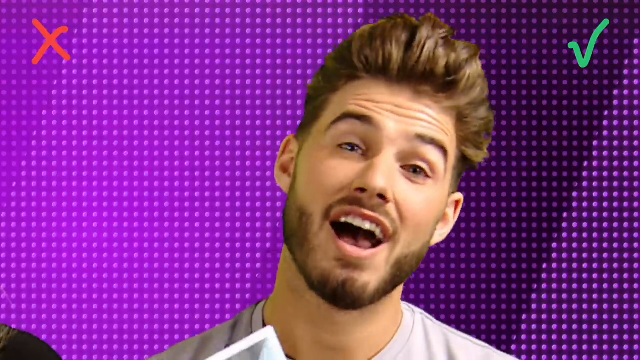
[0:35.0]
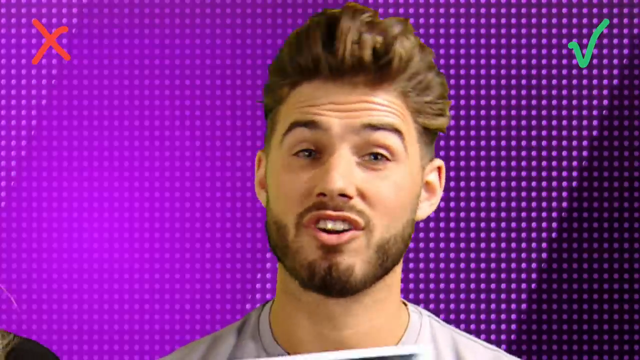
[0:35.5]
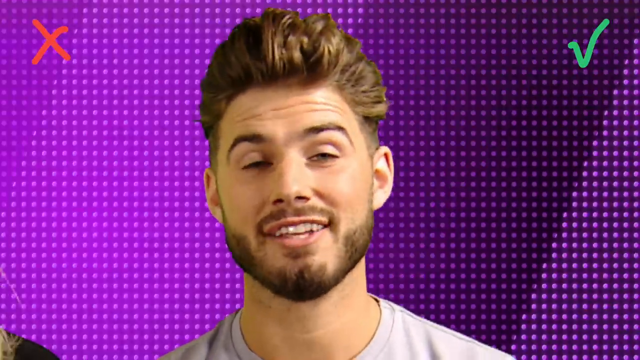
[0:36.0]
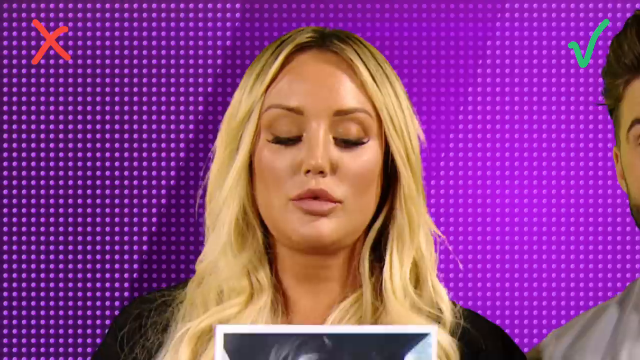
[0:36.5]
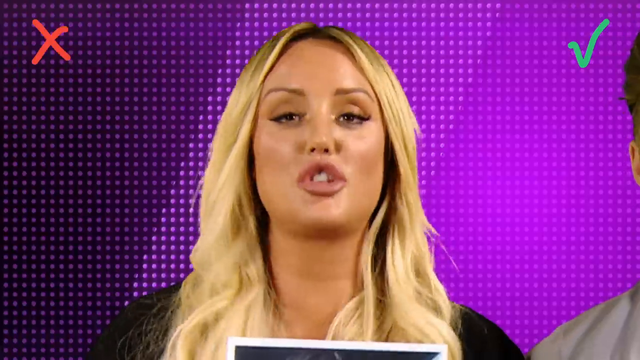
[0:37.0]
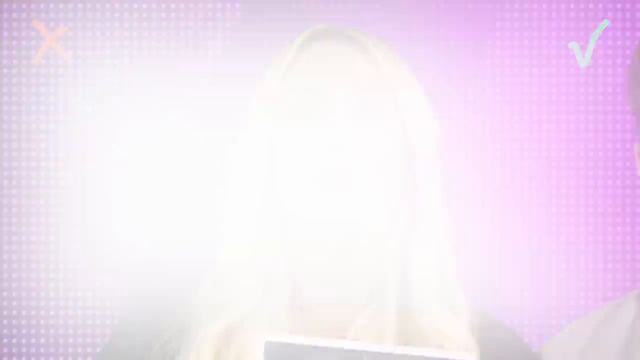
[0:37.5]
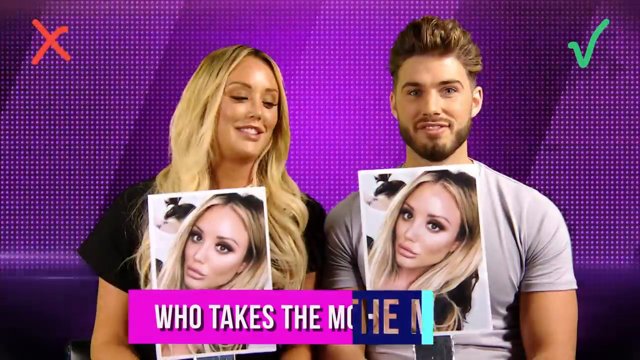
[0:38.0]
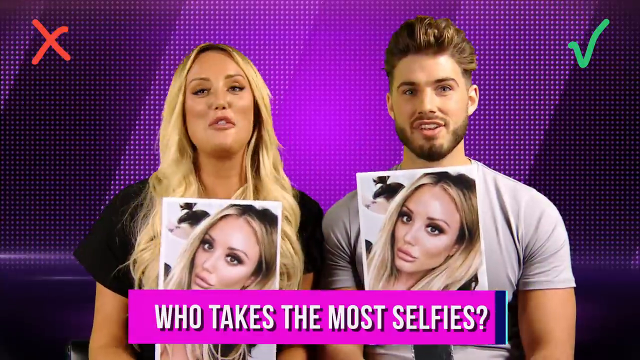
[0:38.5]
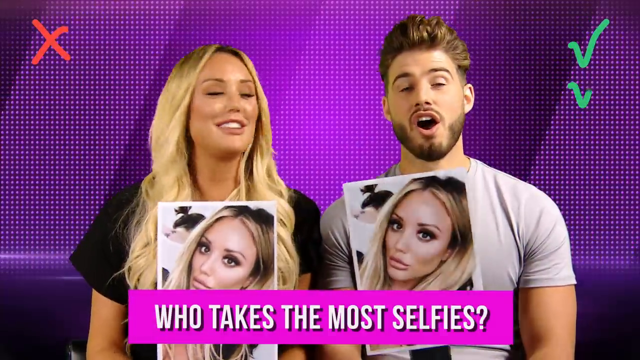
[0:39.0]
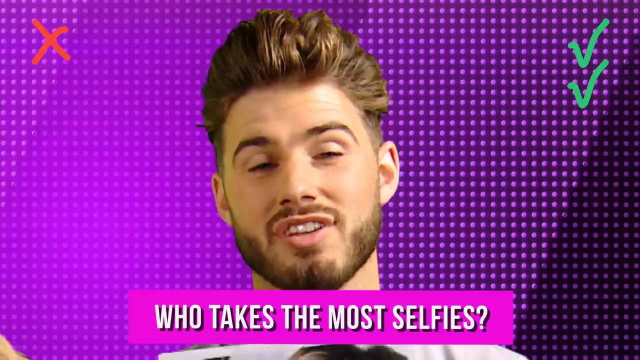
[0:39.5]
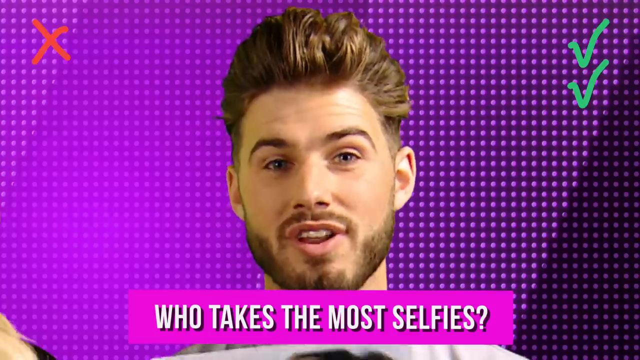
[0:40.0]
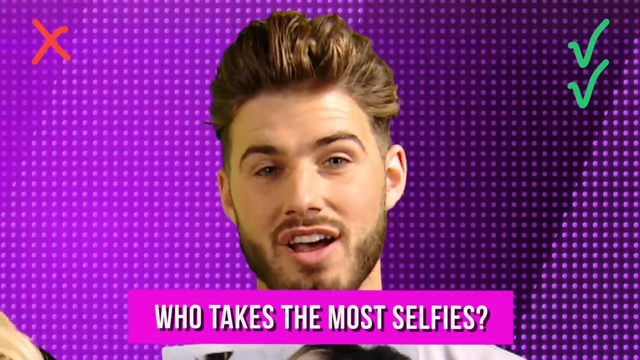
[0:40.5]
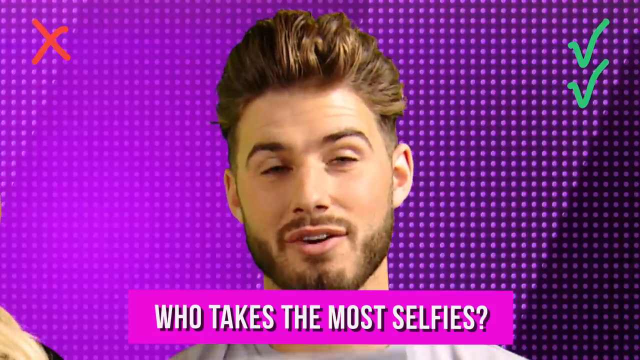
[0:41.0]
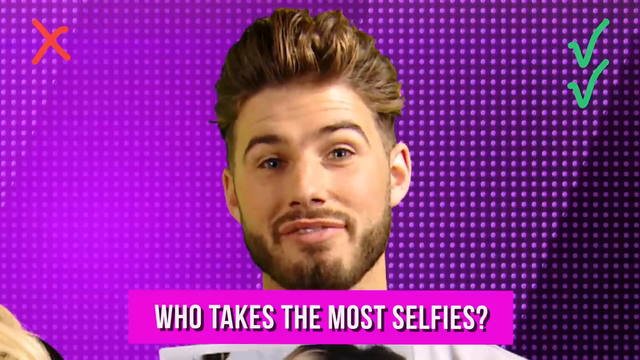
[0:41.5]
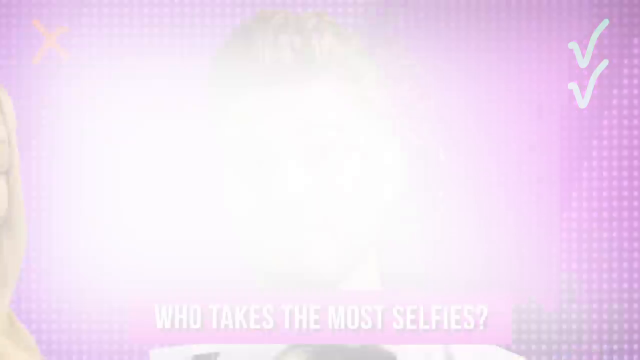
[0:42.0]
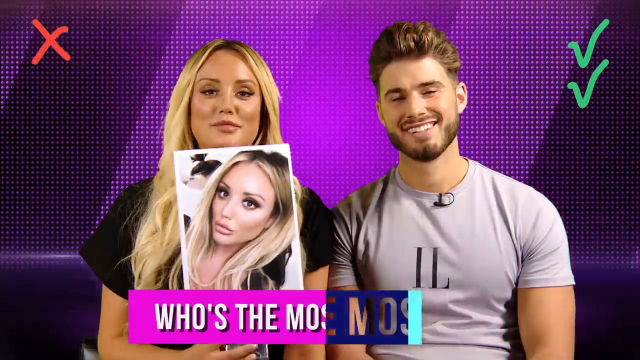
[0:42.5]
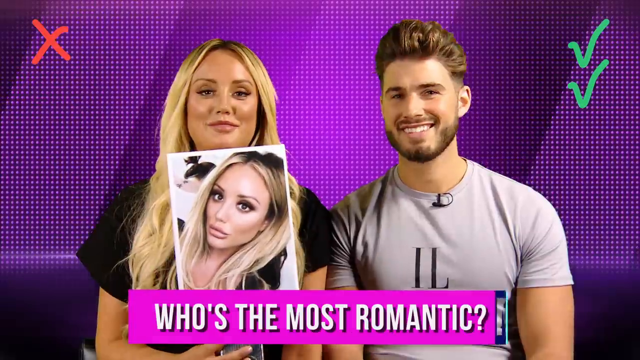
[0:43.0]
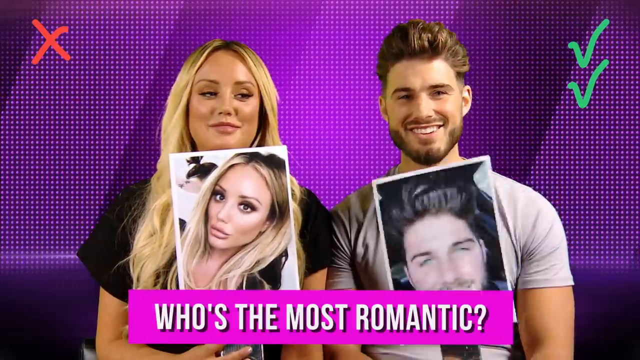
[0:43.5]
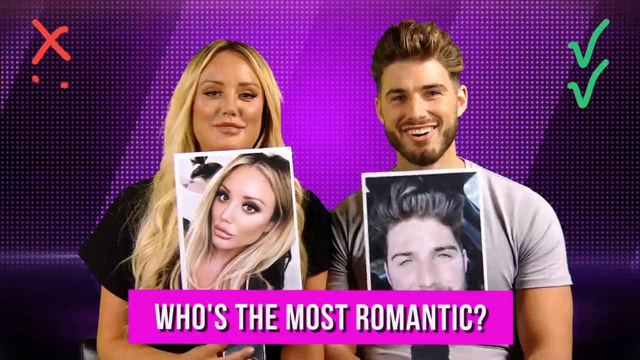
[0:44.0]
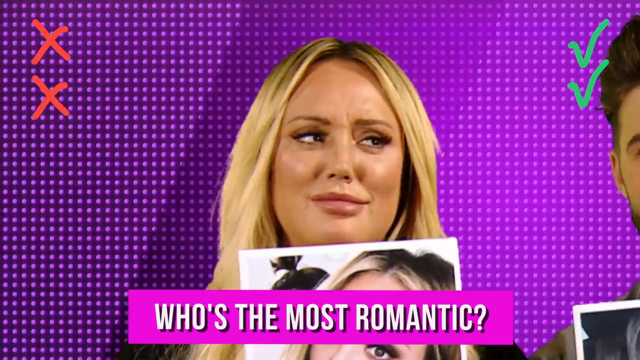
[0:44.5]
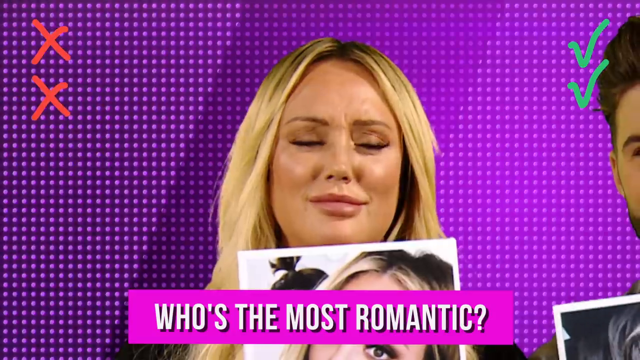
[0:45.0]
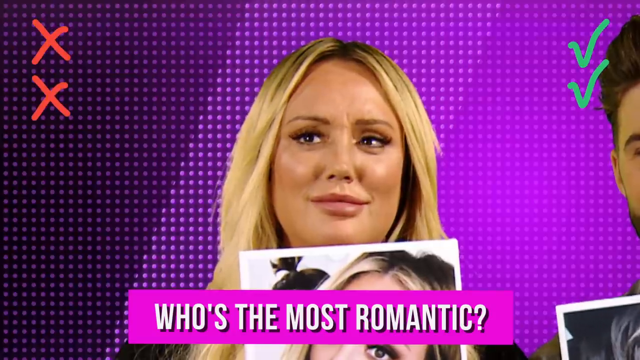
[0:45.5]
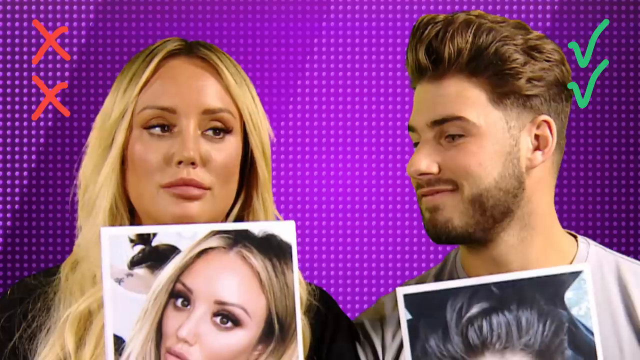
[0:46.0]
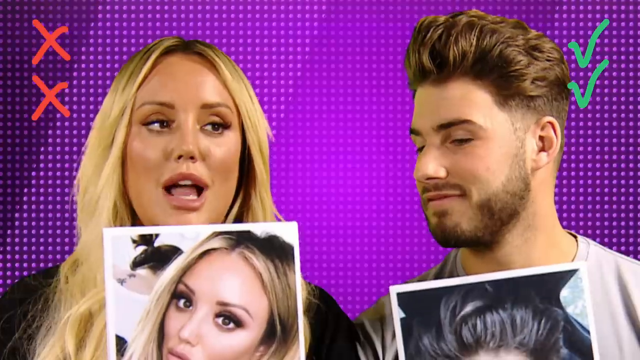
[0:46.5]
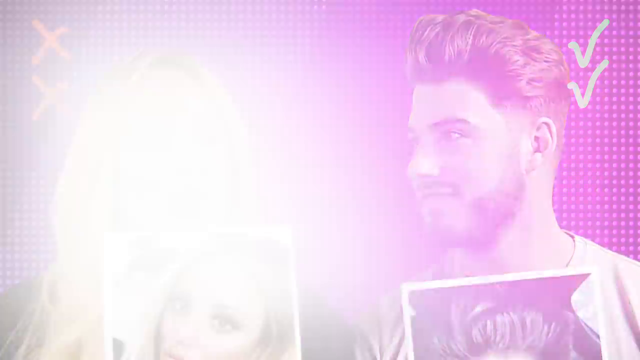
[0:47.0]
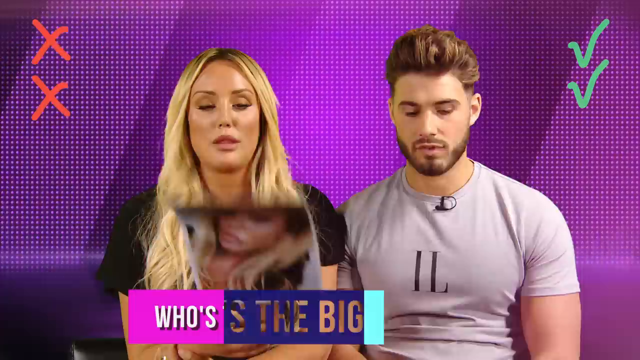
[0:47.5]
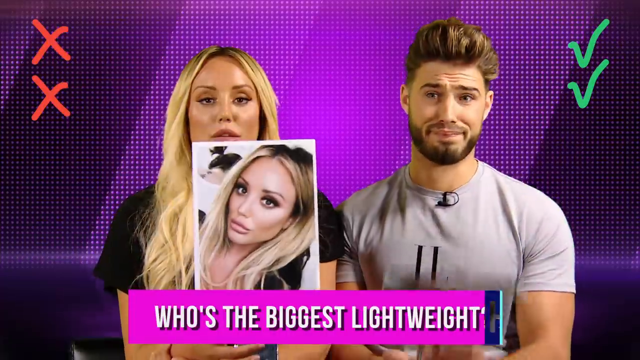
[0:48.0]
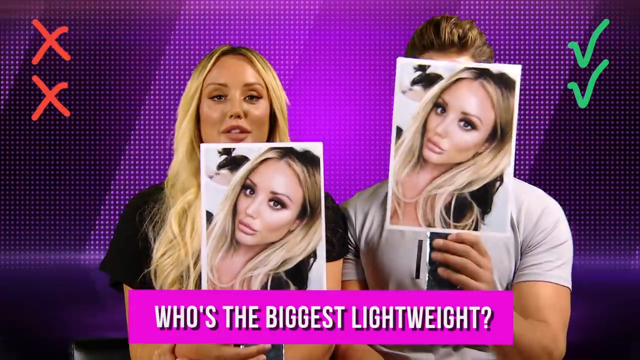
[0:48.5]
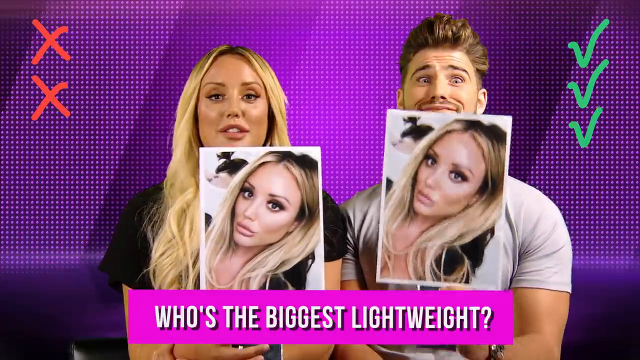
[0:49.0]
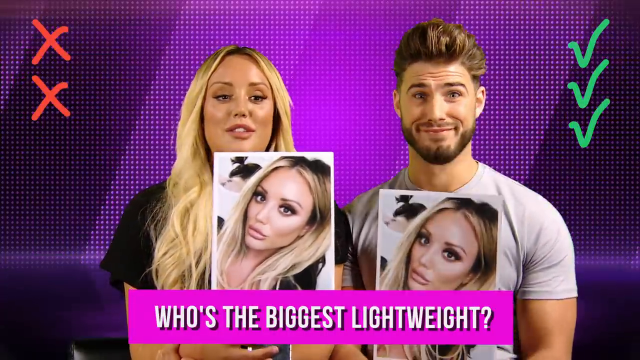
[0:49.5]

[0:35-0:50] For "who takes the most selfies?" they both vote for Charlotte and hold up a picture of her. For "who's the most romantic?" they each pick themselves, and each looks somewhat confused as to why the other picked themselves. For "who's the biggest lightweight?" they both vote for her. The video cuts from question to question in fairly rapid succession, with close-ups of each of them as they talk about their answers, and by the end the tally is two wrongs and three rights.